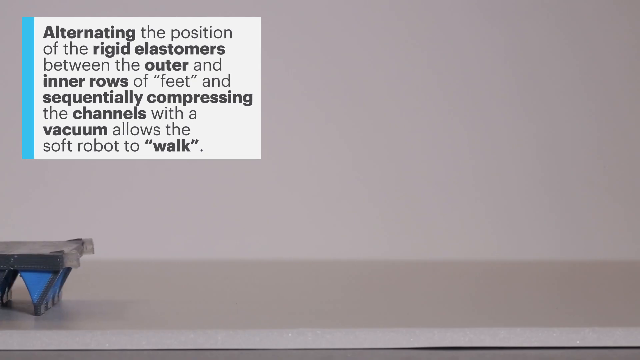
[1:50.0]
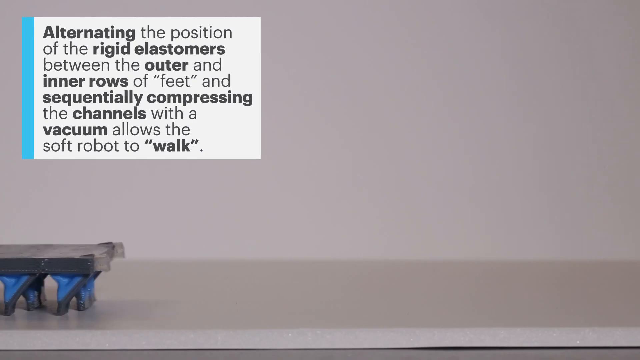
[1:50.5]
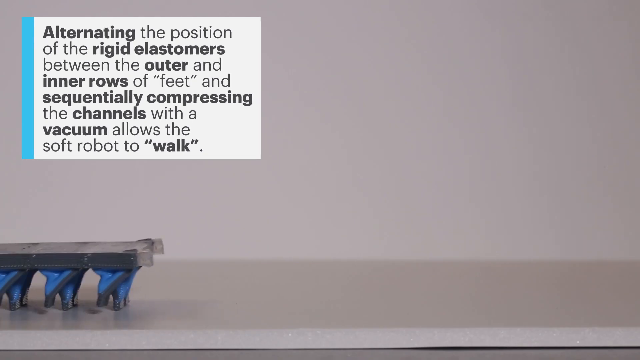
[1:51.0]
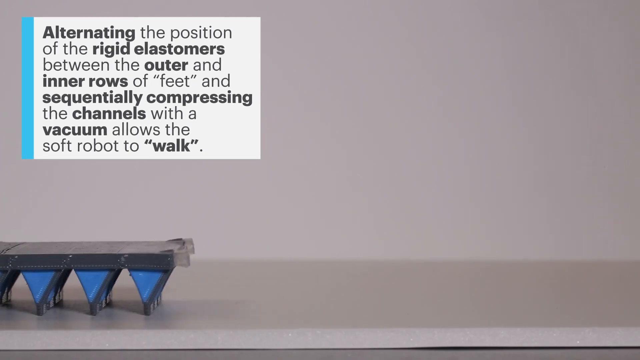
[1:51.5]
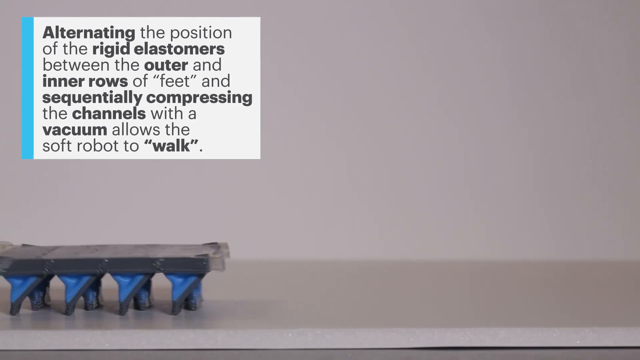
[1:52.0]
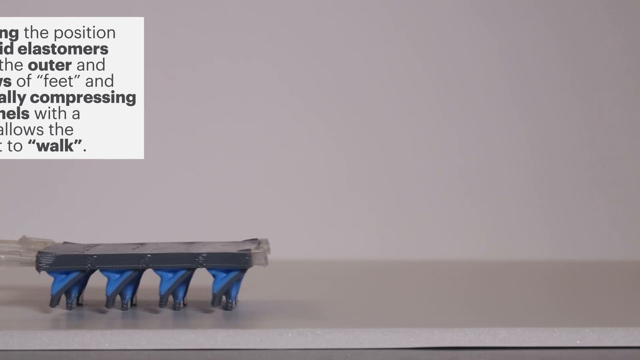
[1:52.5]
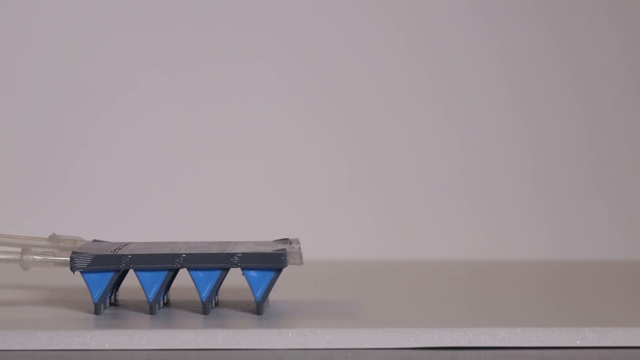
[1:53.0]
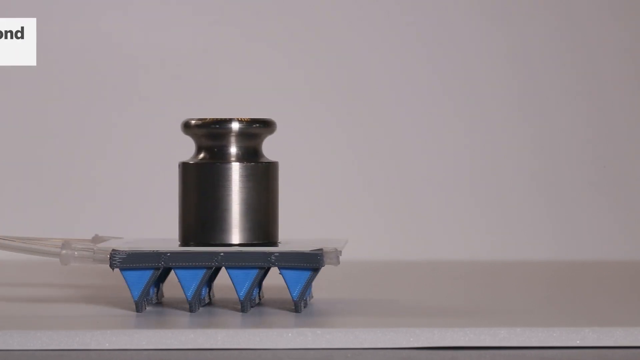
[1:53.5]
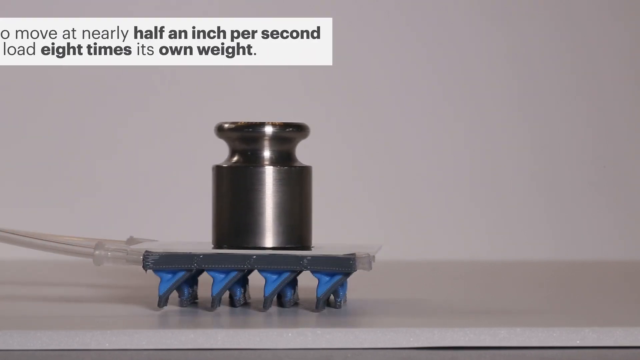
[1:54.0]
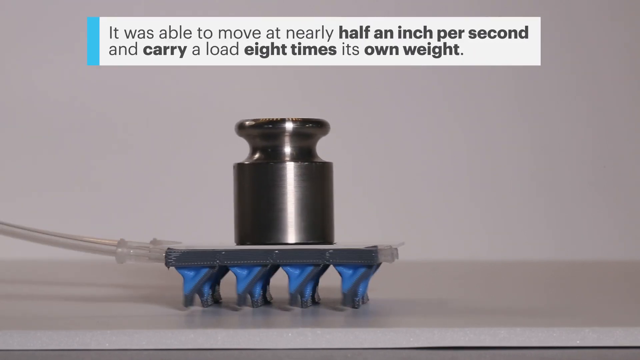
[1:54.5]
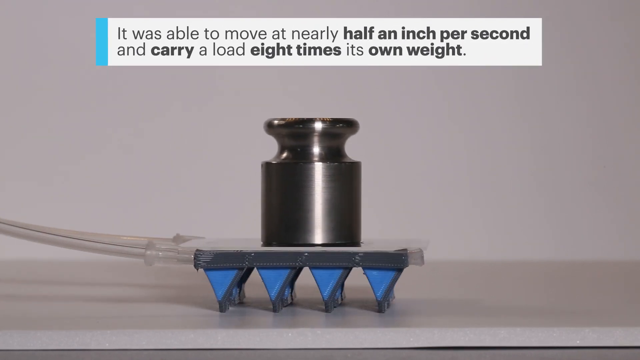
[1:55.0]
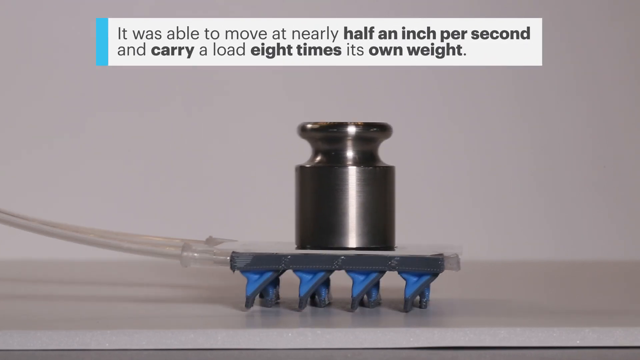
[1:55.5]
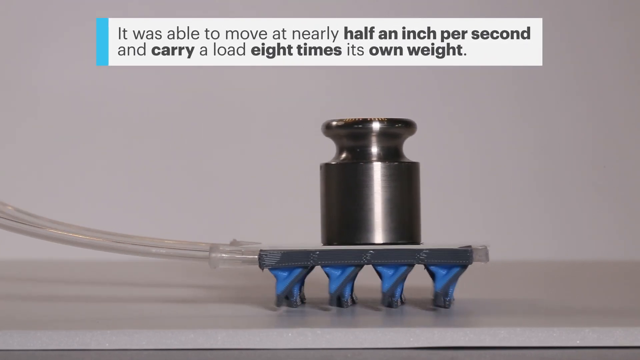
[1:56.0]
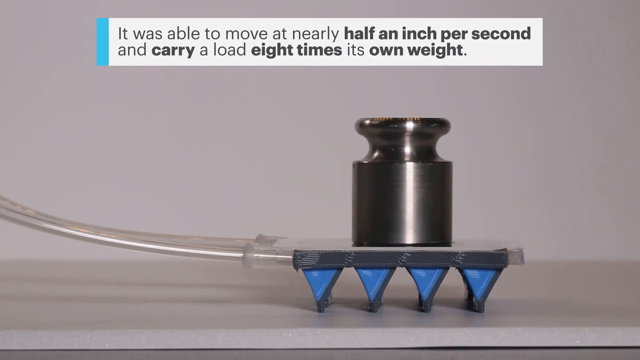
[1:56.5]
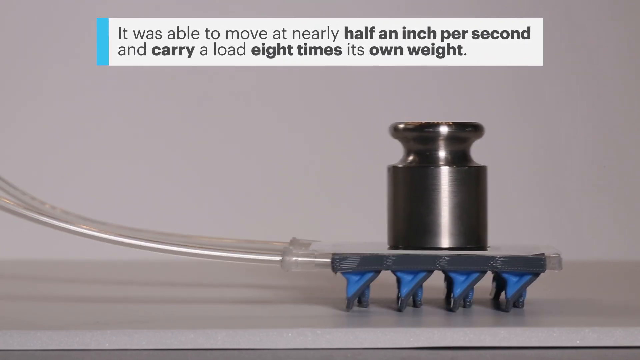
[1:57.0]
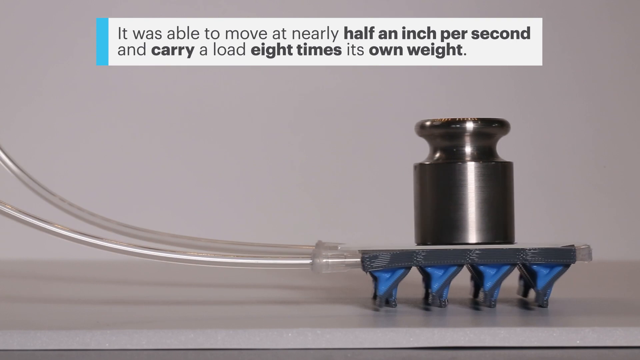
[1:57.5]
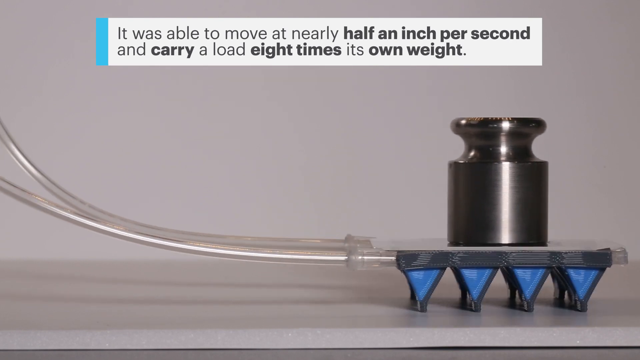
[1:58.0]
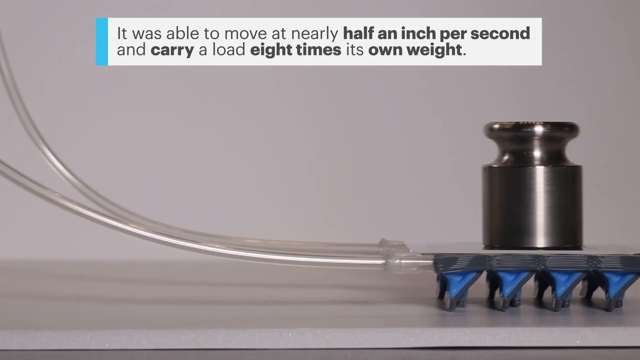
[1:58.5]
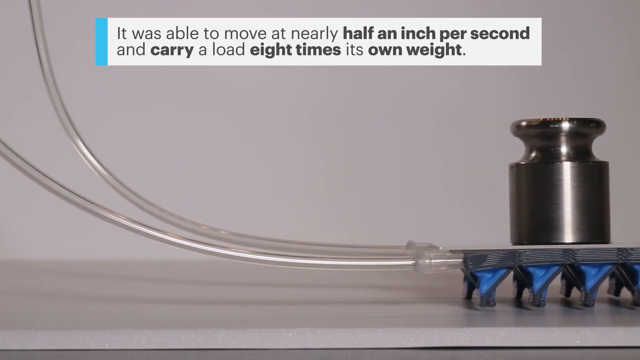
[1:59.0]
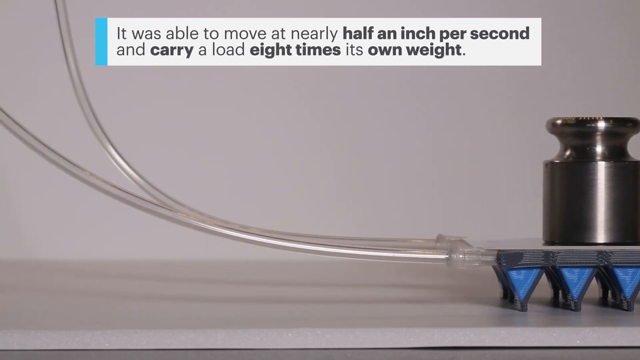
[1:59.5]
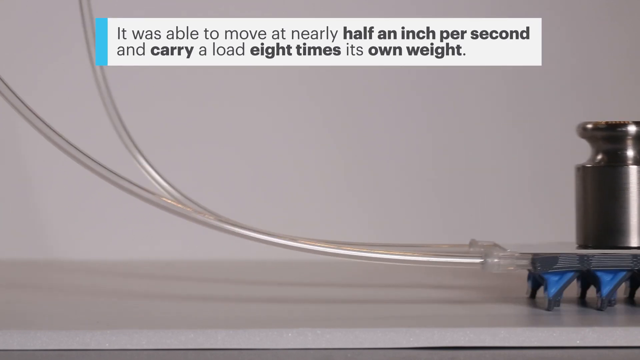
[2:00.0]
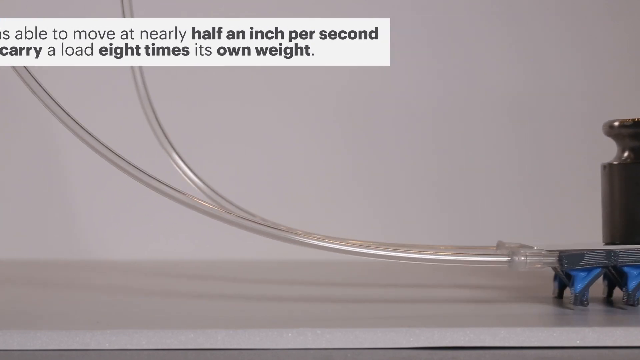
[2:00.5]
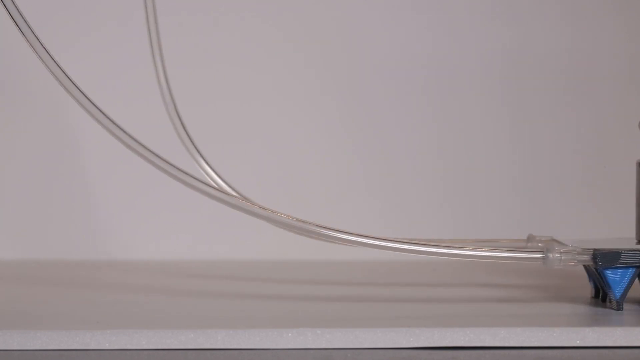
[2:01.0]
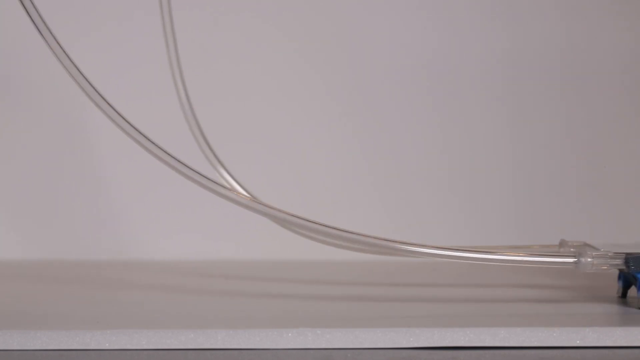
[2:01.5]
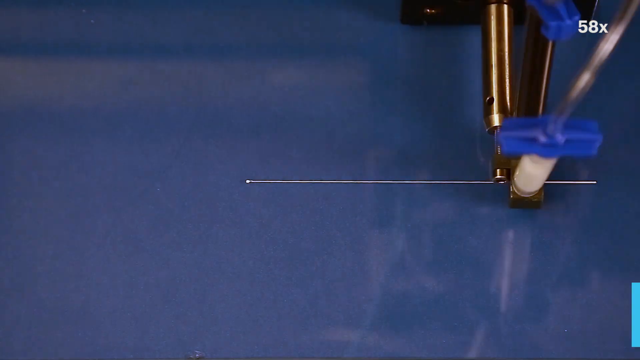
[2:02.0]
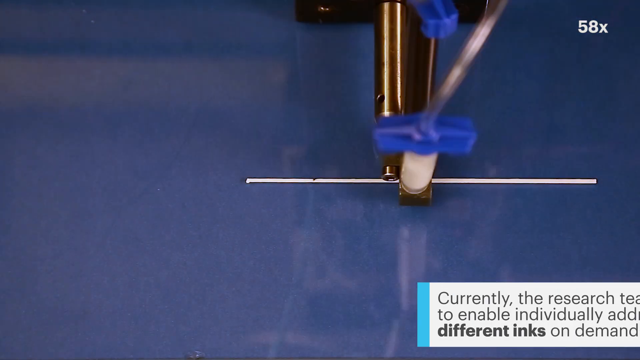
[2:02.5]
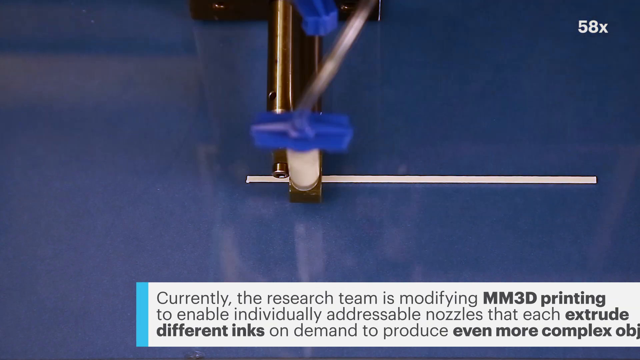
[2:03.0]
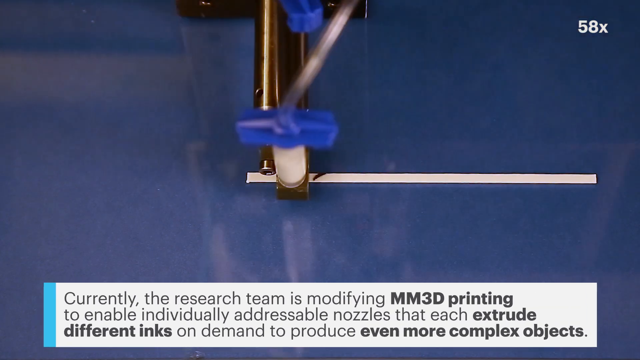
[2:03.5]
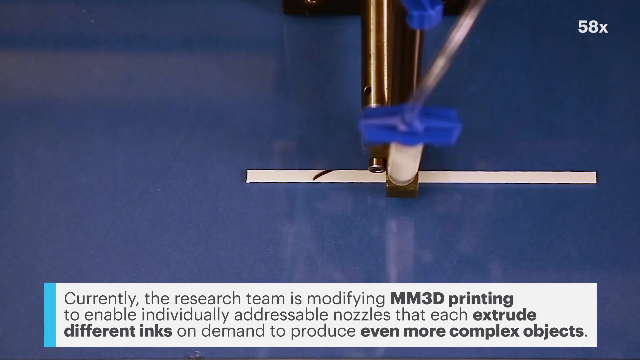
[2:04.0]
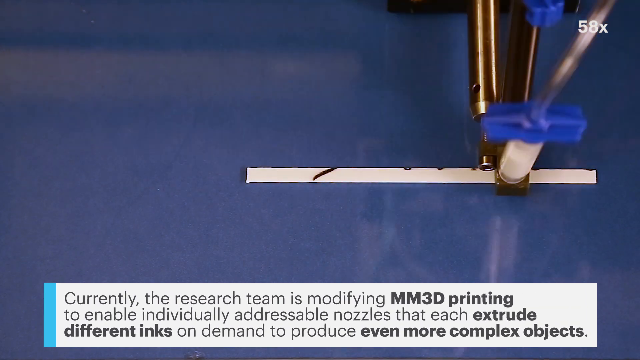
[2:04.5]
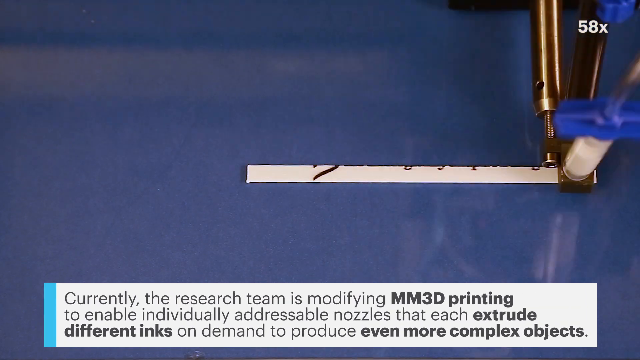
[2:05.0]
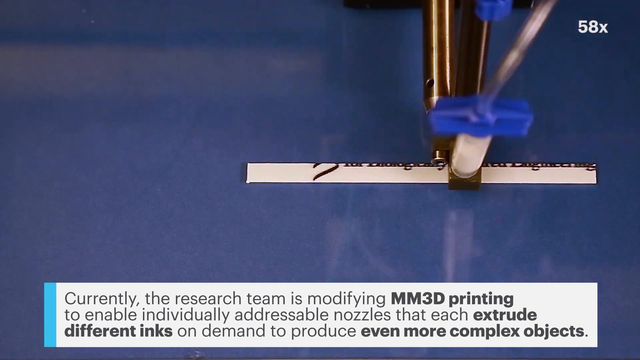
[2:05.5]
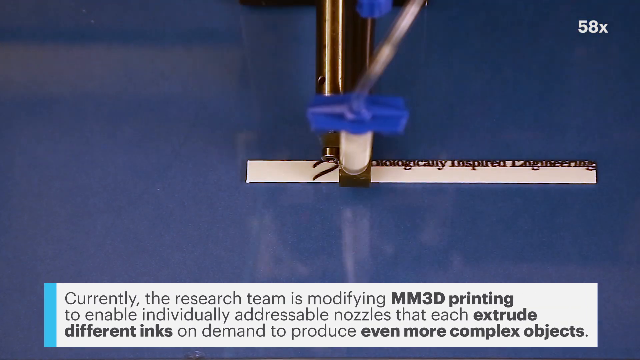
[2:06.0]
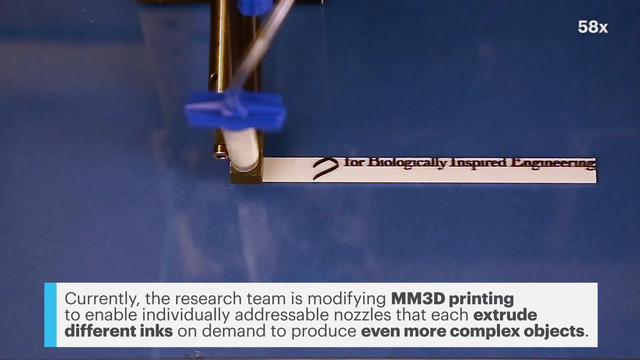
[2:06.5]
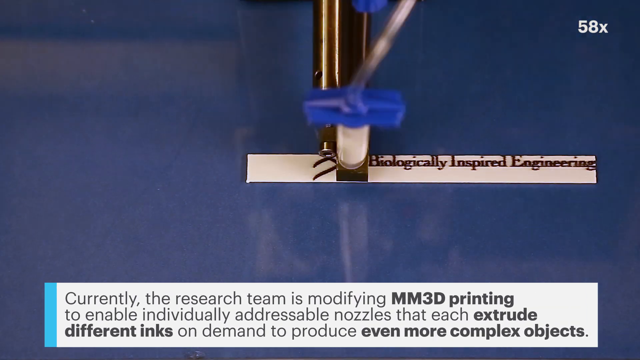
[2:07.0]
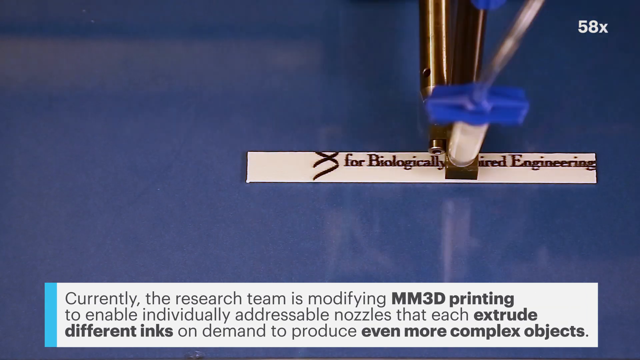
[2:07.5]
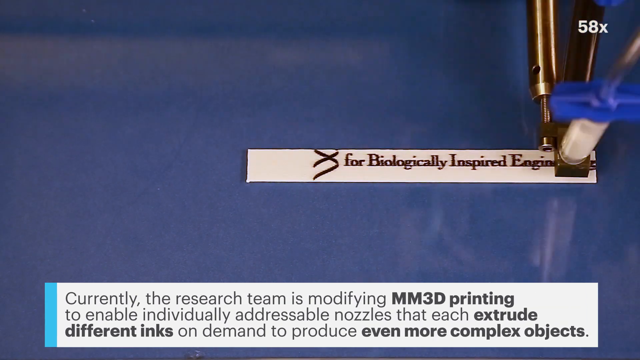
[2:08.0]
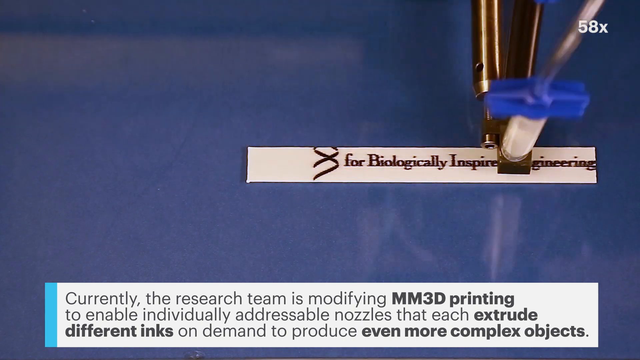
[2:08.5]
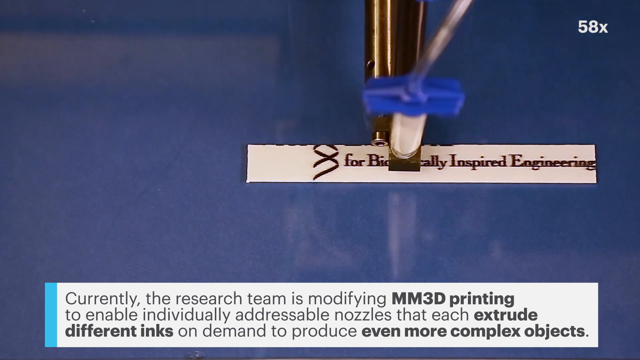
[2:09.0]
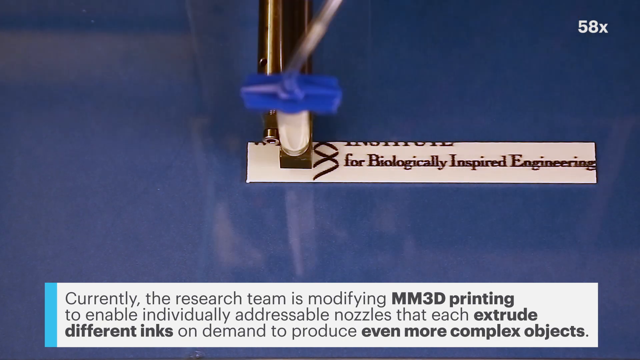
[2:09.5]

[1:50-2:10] The component moves across the floor from left to right, carrying a larger device on its back. Text states that this test creation was able to move at nearly half an inch per second and can carry a load eight times greater than its own weight. Two blue tubes are attached at its back, apparently providing the impetus for it to move. Text then states that the research team is currently modifying MM3D printing to enable individually addressable nozzles that each extrude different inks on demand to produce even more complex objects. A print nozzle then works at 58 times its normal speed, appearing to print a nameplate or something similar, with the swift ink changes producing text.